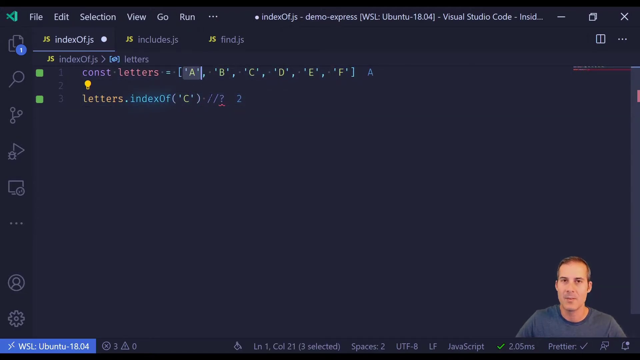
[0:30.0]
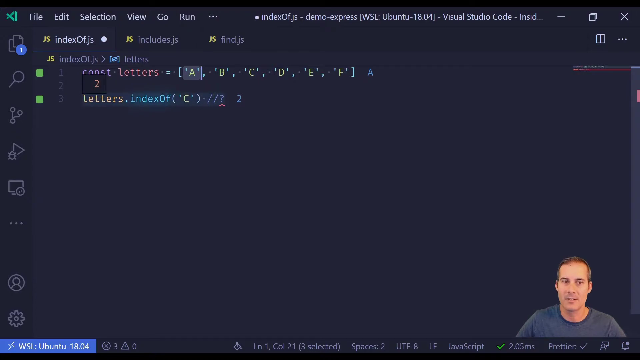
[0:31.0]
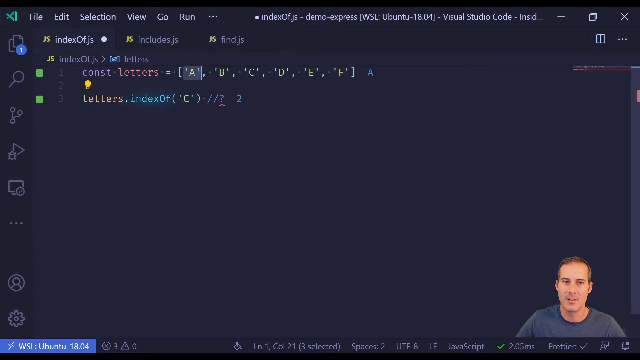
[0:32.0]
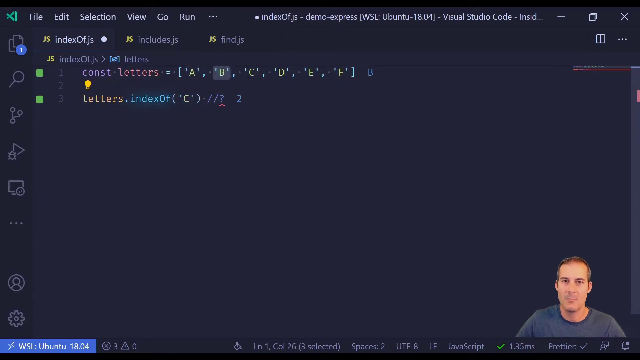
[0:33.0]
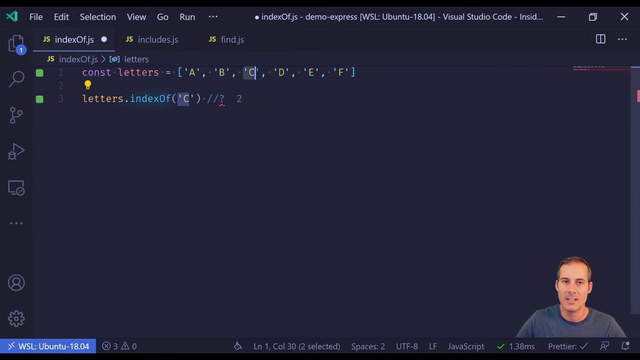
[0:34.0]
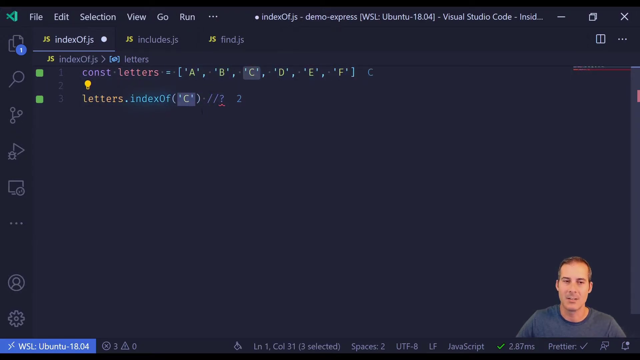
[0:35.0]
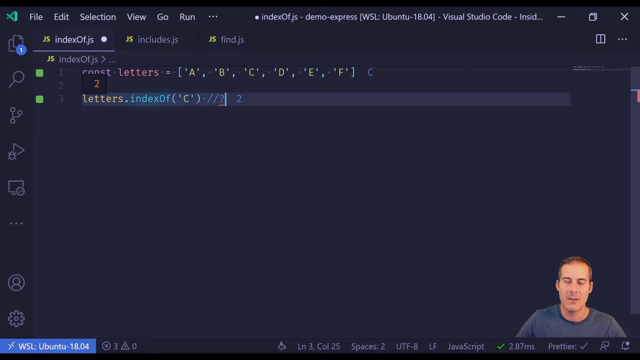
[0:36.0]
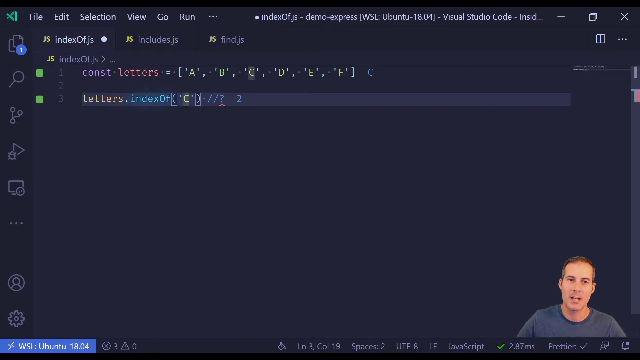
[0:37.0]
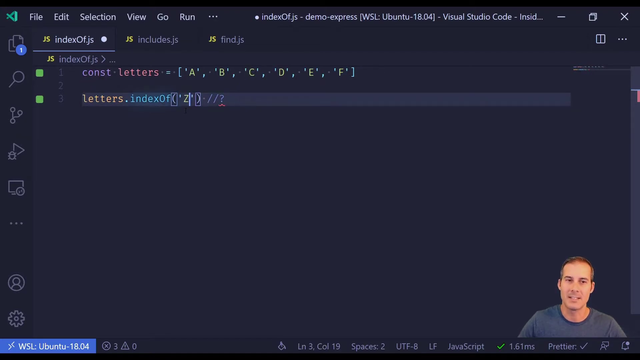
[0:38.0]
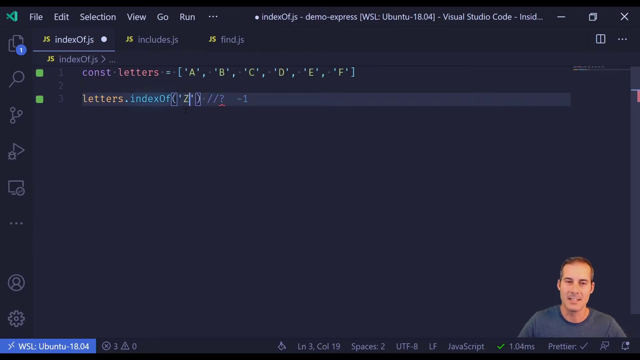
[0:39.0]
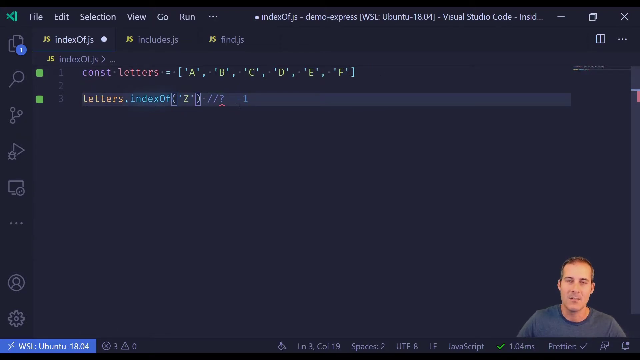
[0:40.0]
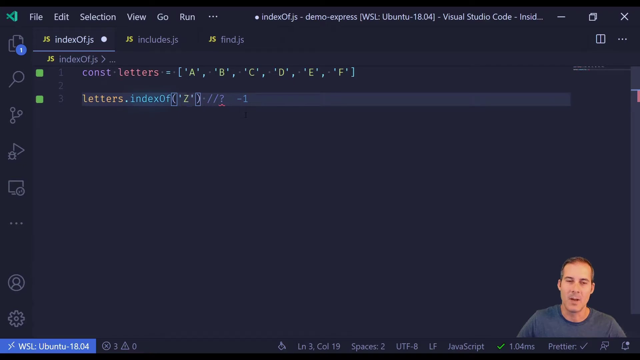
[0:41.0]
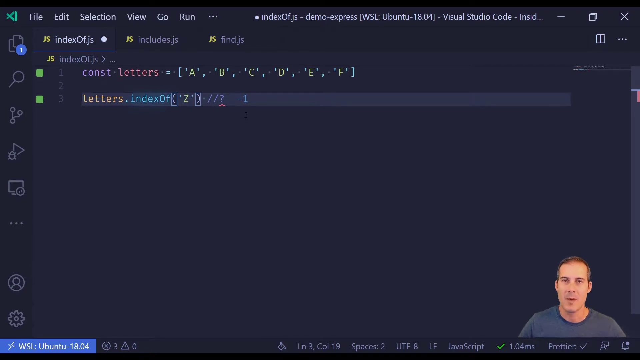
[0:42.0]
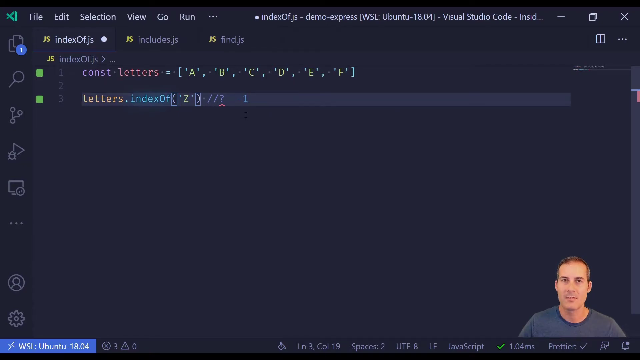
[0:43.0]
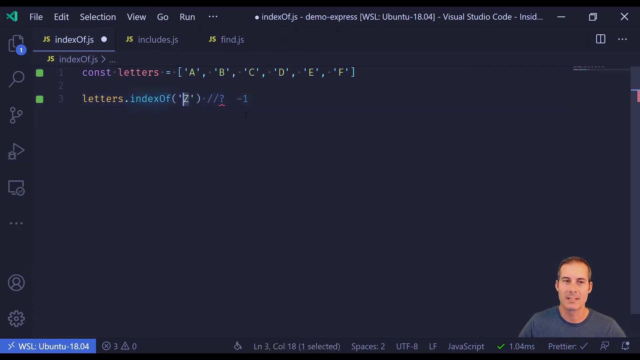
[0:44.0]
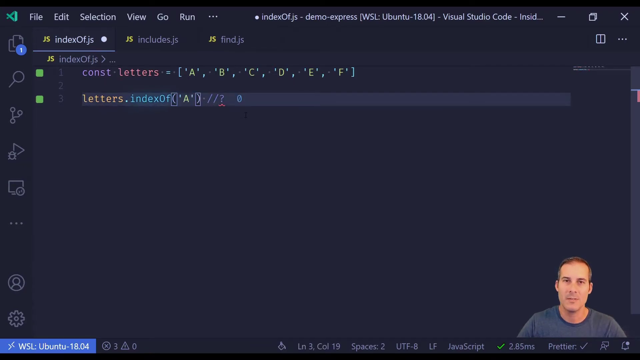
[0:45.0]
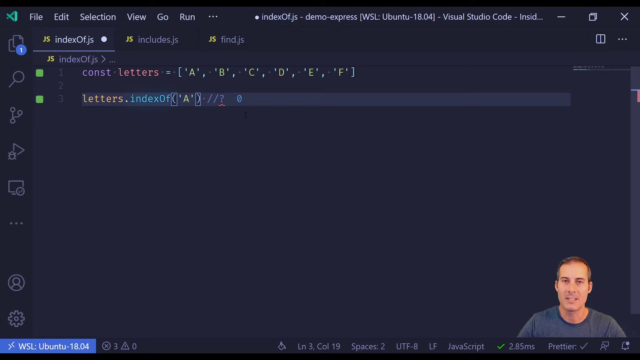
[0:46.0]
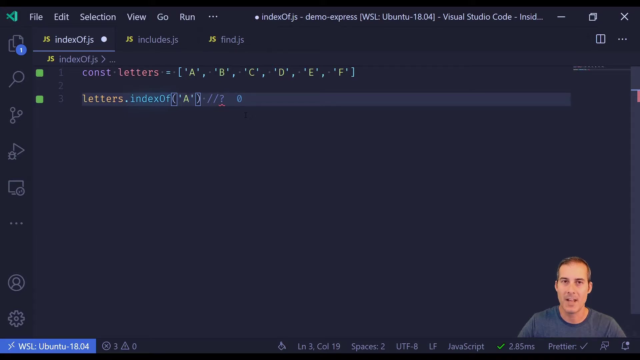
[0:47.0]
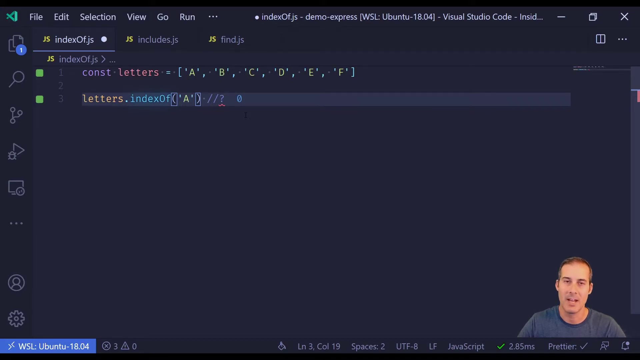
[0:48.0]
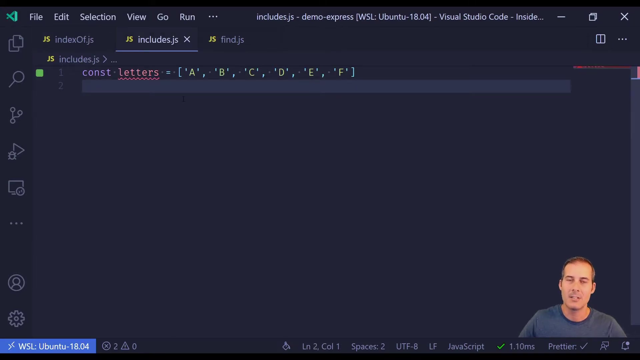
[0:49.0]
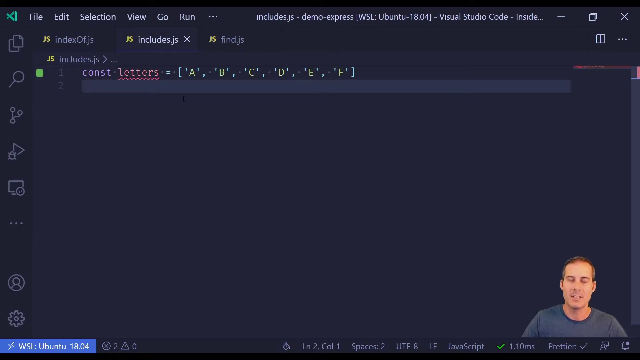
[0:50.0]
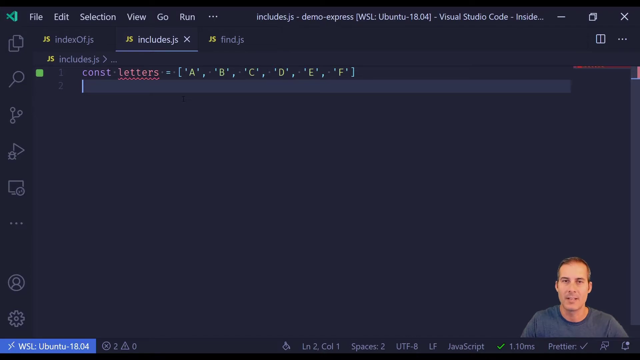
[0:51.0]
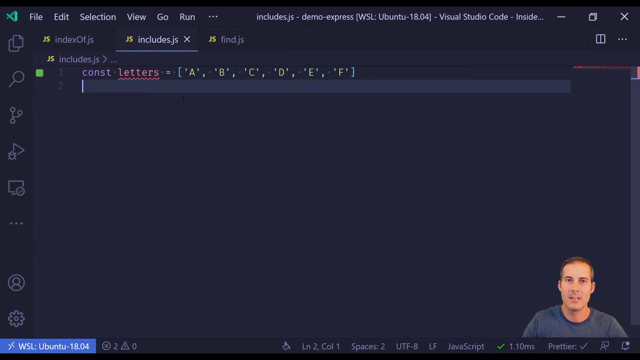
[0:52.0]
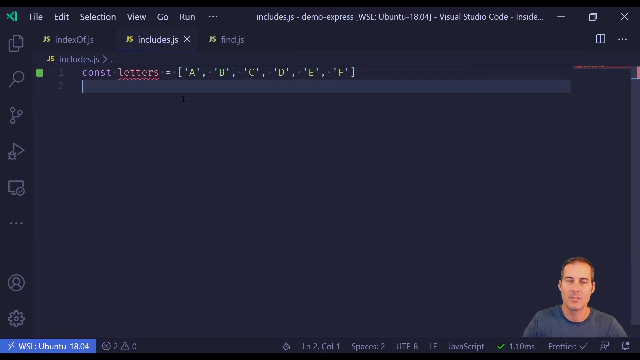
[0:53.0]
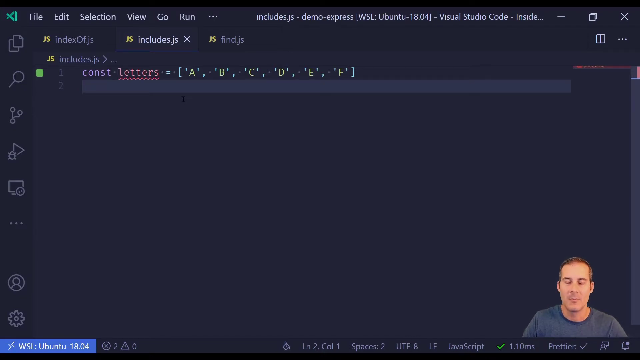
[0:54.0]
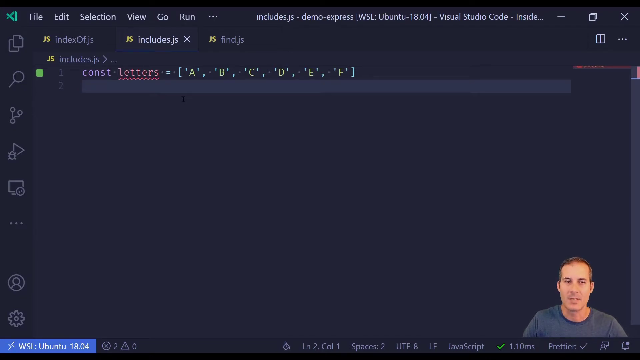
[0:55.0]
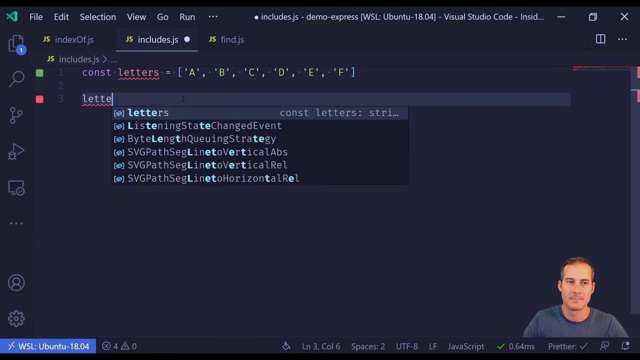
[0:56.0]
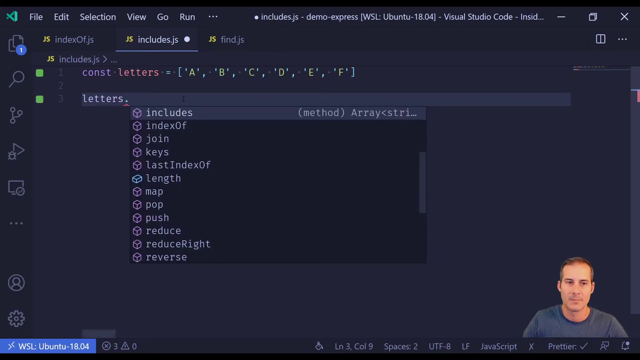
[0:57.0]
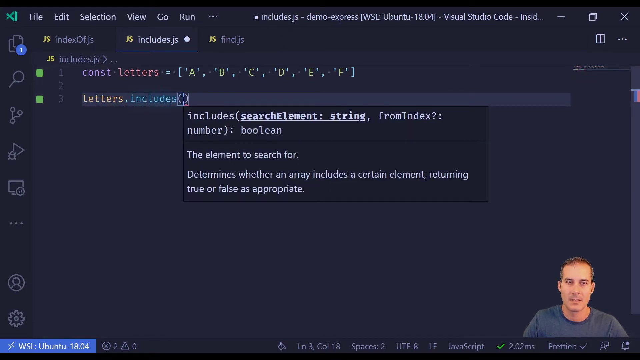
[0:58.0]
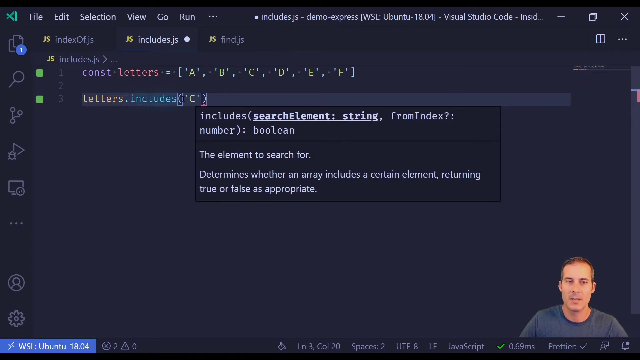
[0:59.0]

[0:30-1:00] Joel is at the bottom right of the screen while the JavaScript lesson continues. As he types, a small window comes up below what he is typing. The window shows "index", then "index of.", and "JS", as he makes small changes one at a time.